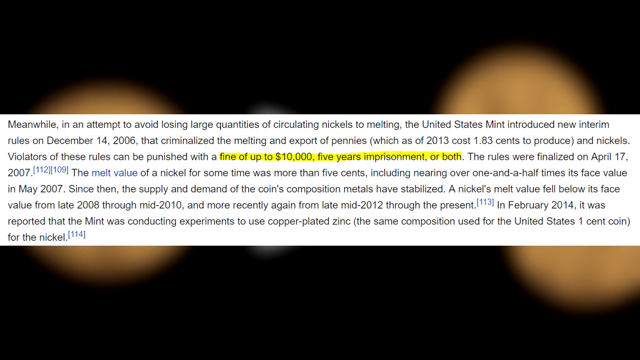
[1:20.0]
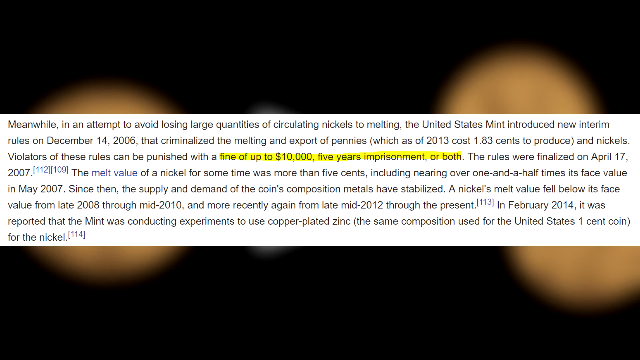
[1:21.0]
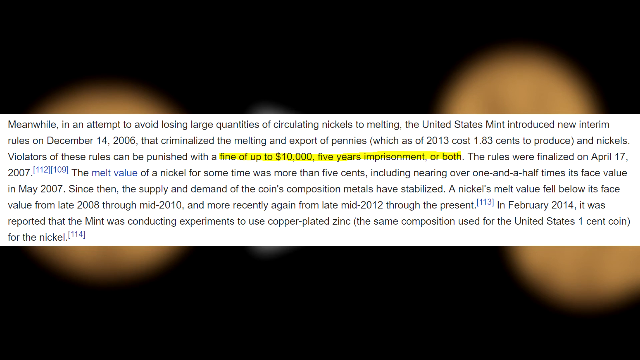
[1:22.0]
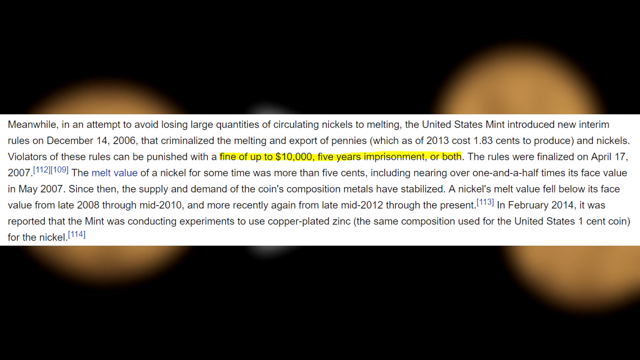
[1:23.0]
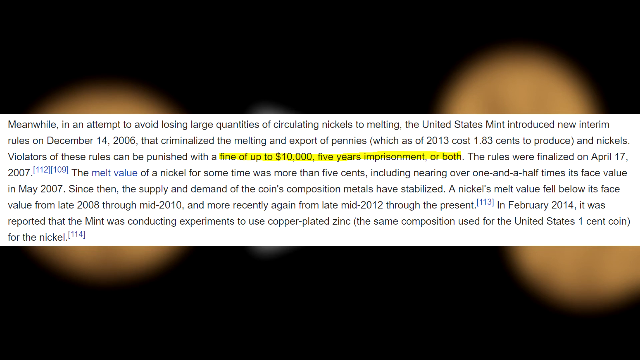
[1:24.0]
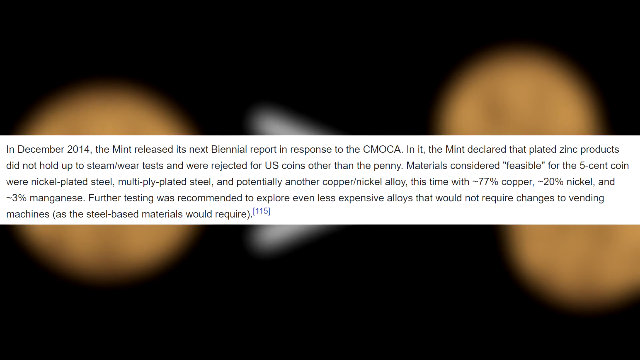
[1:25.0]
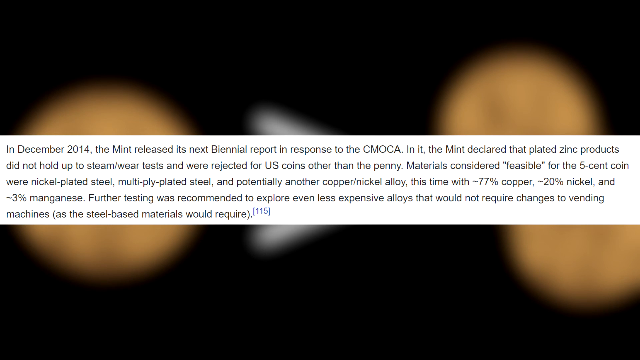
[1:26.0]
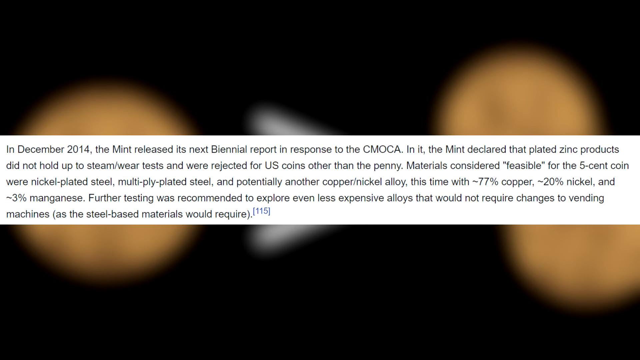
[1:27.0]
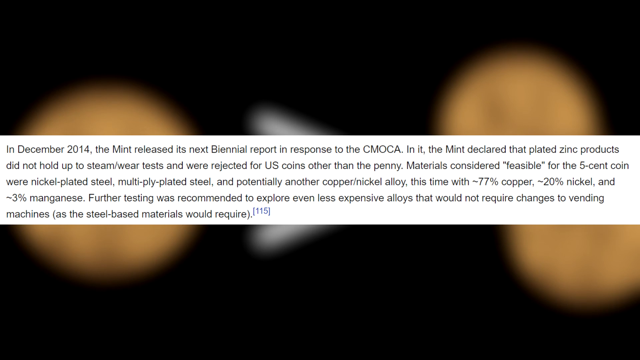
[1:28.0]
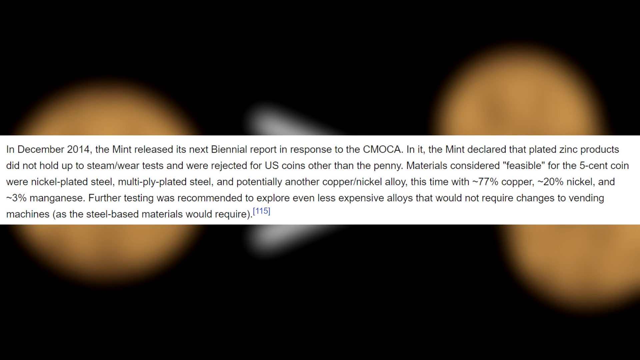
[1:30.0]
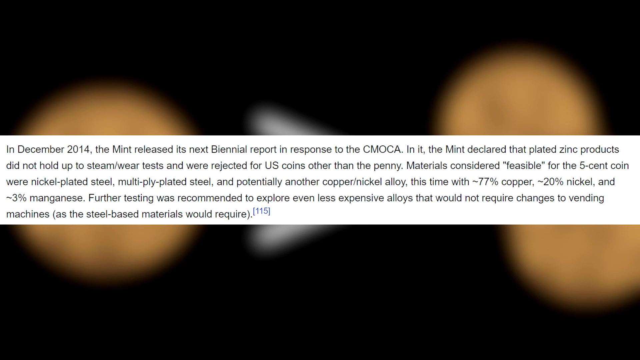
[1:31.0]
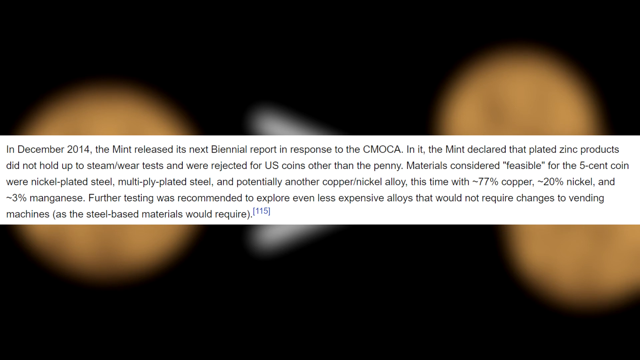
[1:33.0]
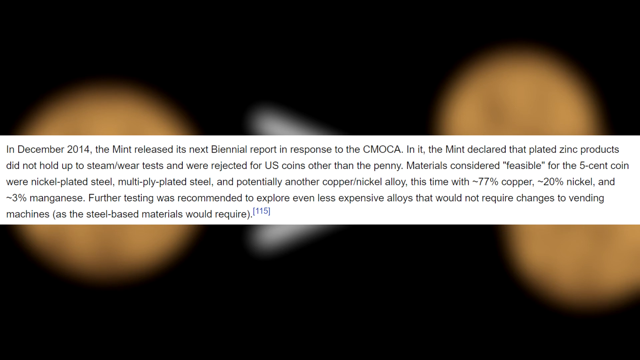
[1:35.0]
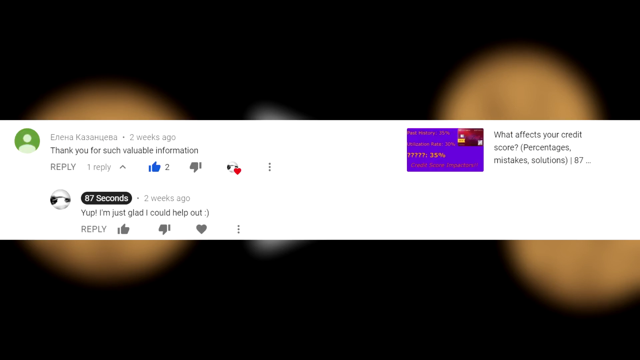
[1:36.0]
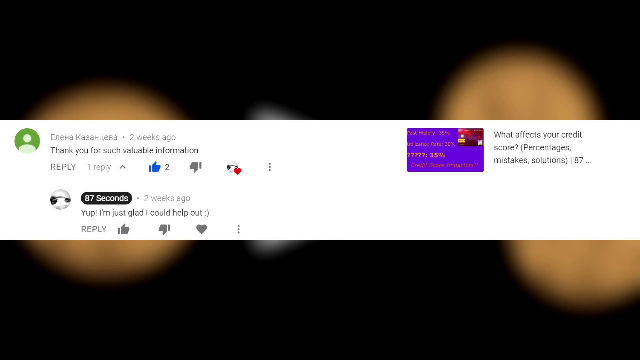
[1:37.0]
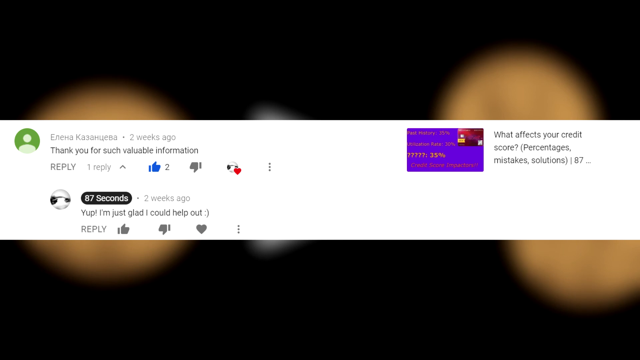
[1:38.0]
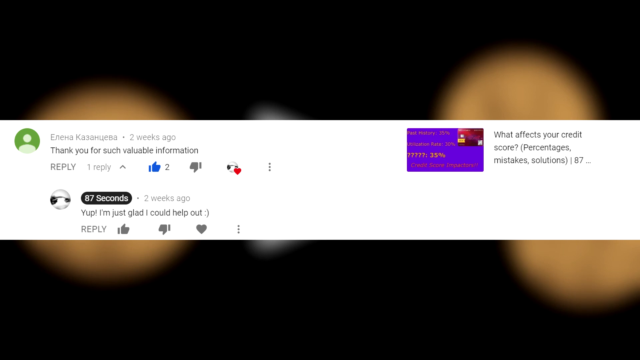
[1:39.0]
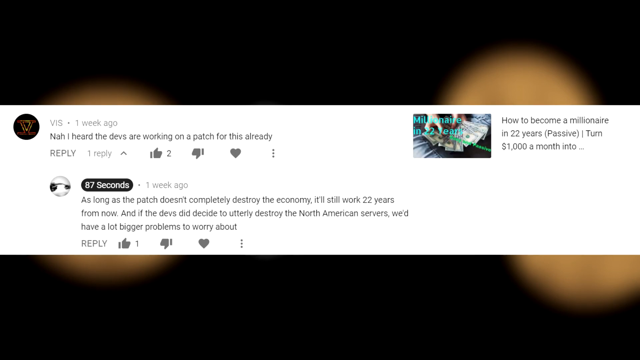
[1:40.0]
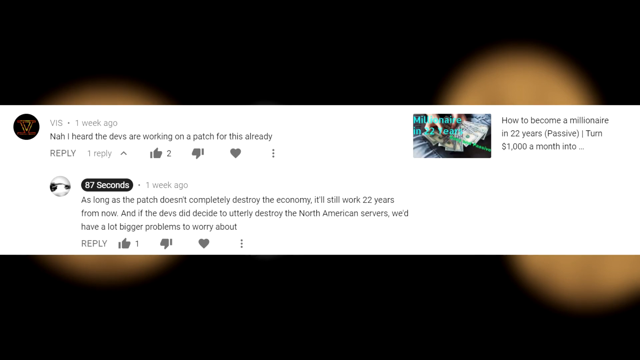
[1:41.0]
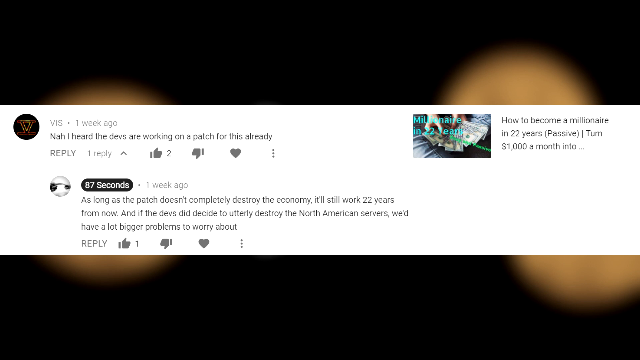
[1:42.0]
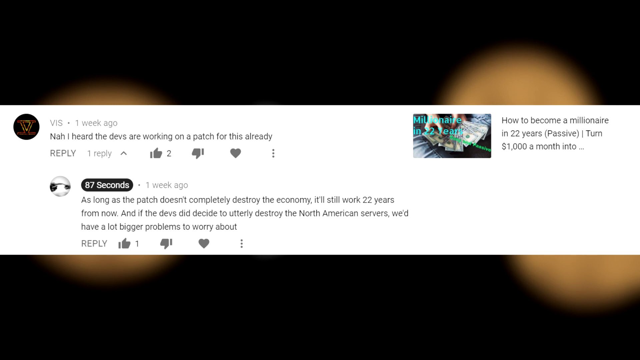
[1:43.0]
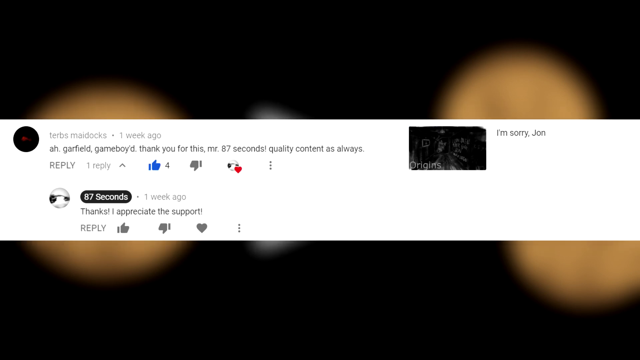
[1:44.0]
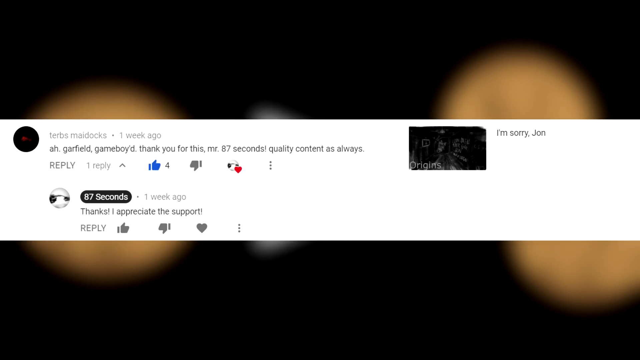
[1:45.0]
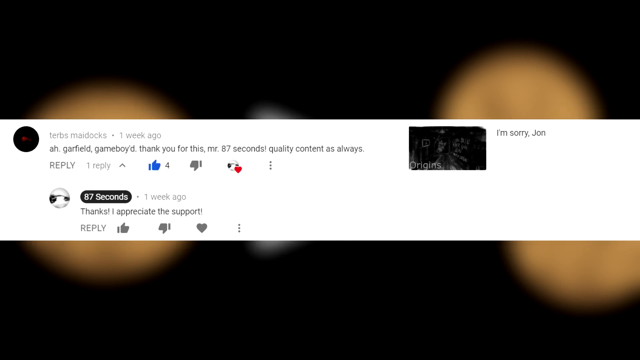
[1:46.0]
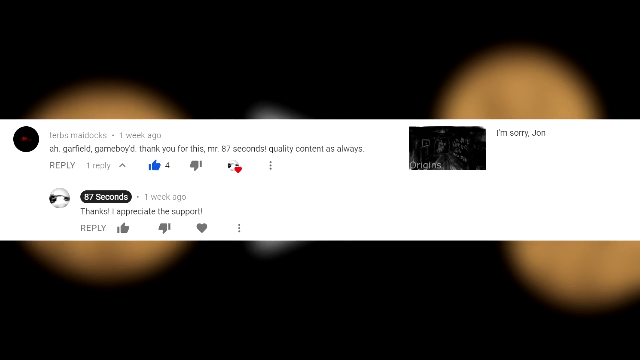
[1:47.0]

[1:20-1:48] Text states that, in an attempt to avoid losing large quantities of circulating nickels to melting, it has become an offense to melt and export pennies, with a fine of up to $10,000, five years imprisonment, or both, and that these rules were finalized in April 2007. In December 2014 the Mint released its next report, declaring that plated zinc product did not hold up to steam tests and was rejected for US coins other than the penny. Materials considered feasible for the five cent coin were nickel plated steel, multiply plated steel and potentially a copper nickel alloy, this time with 77% copper, 20% nickel and 3% manganese. Further testing was recommended to explore less expensive alloys that would not require changes to vending machines, as the steel-based materials would. Comments on the video read "thank you for such valuable information" and "Yep, I'm just glad I could help out". There is also an advert for what affects your credit score and a link to another video called "how to become a millionaire in 22 years".